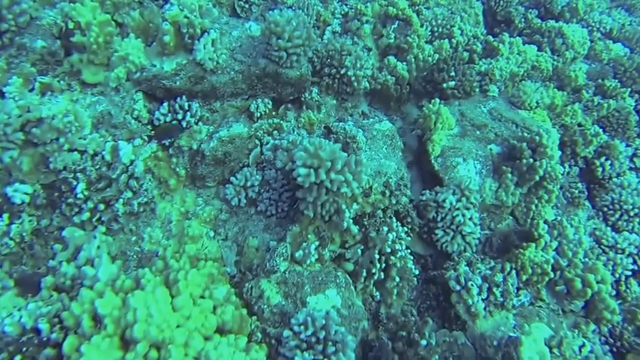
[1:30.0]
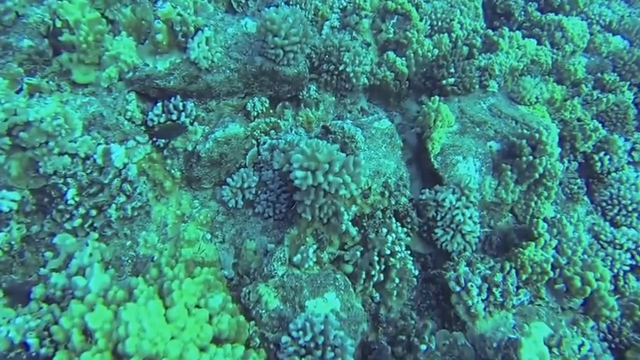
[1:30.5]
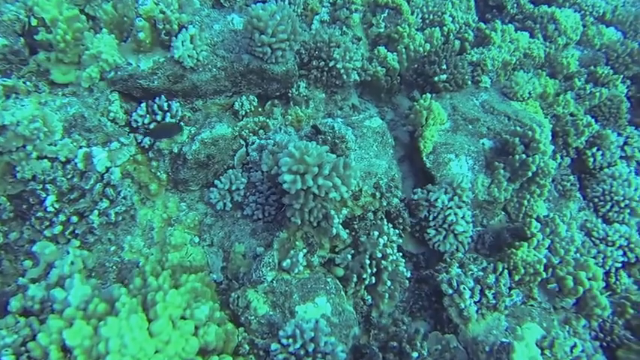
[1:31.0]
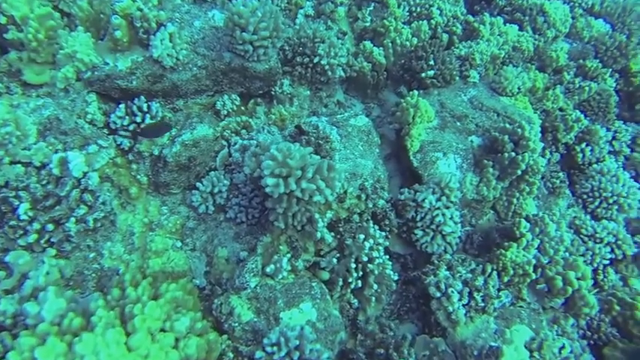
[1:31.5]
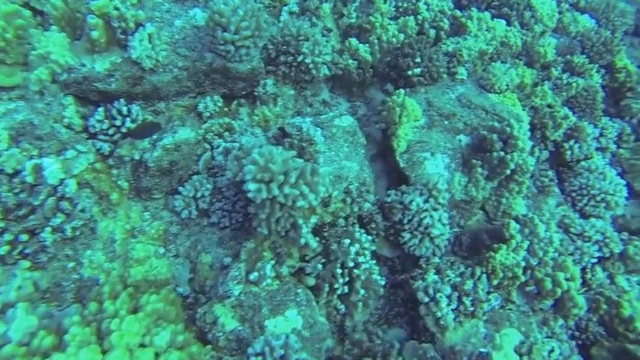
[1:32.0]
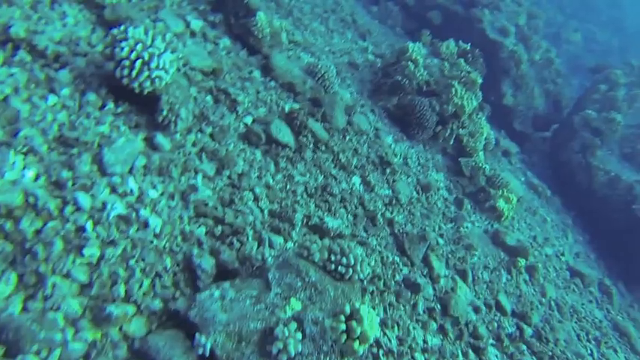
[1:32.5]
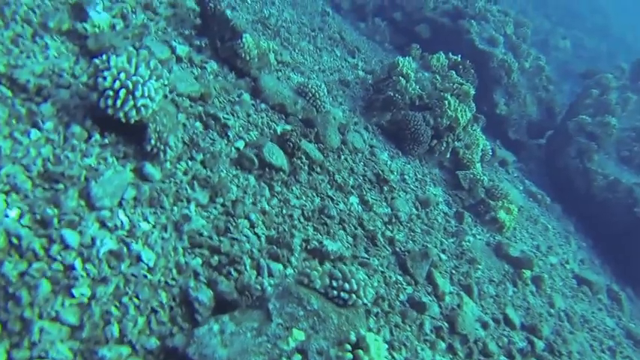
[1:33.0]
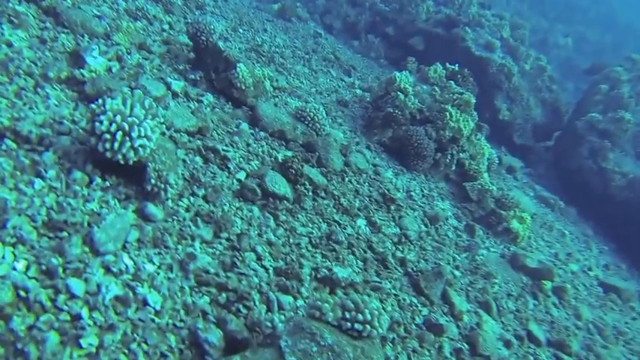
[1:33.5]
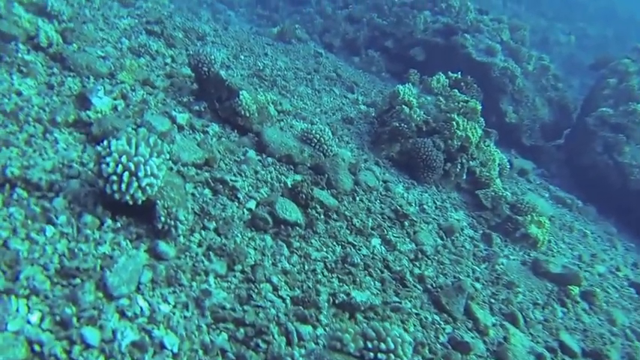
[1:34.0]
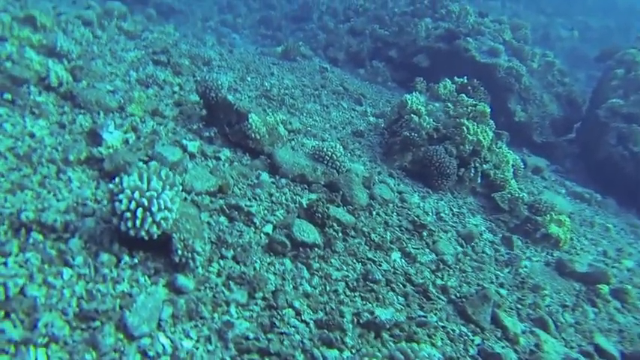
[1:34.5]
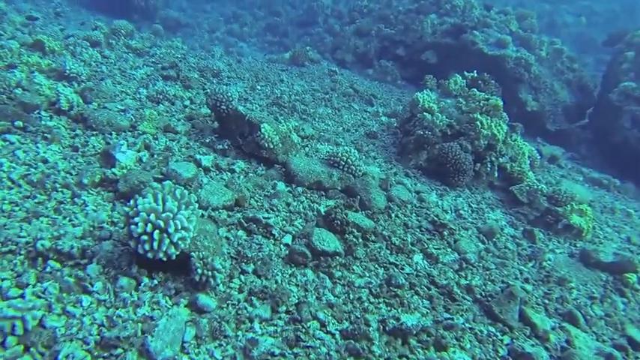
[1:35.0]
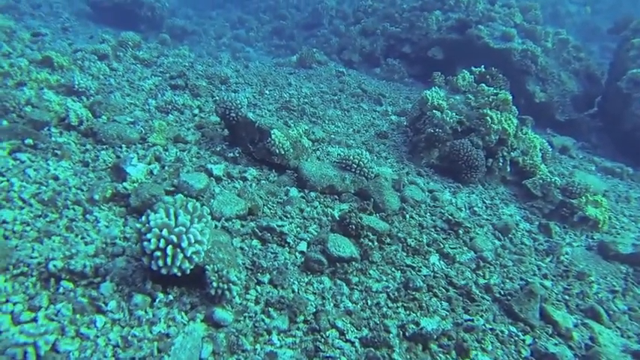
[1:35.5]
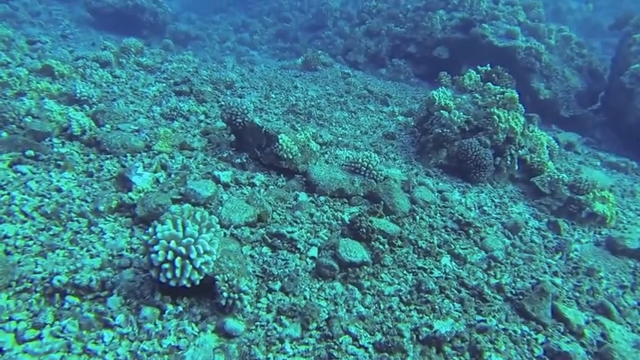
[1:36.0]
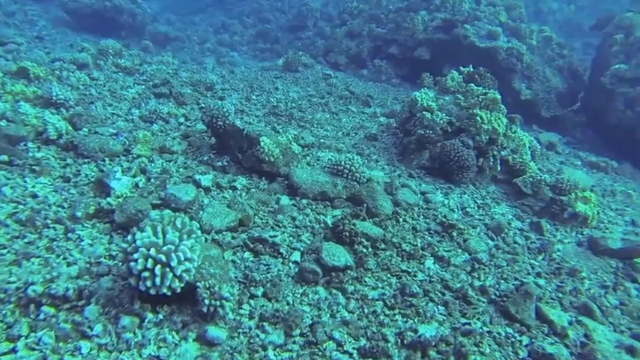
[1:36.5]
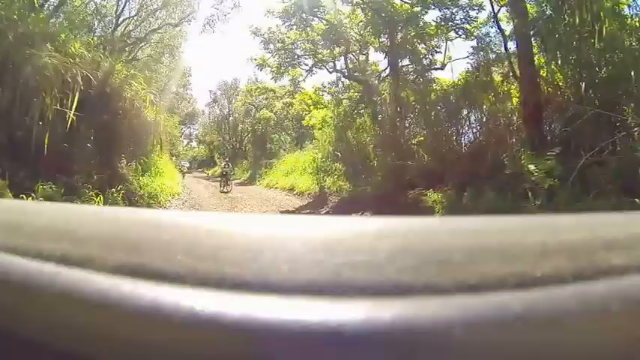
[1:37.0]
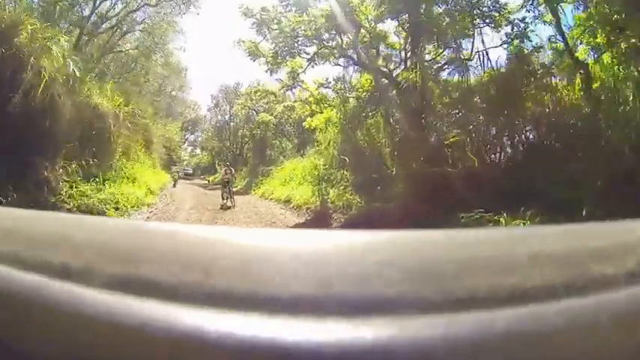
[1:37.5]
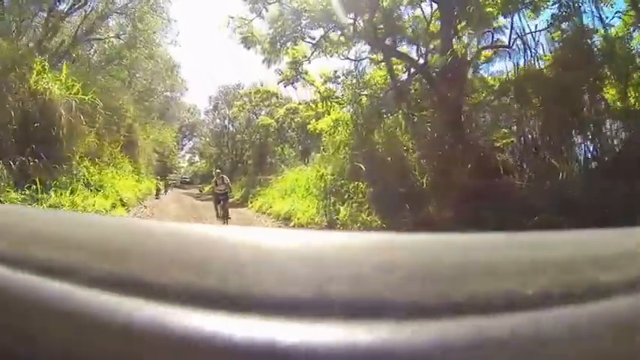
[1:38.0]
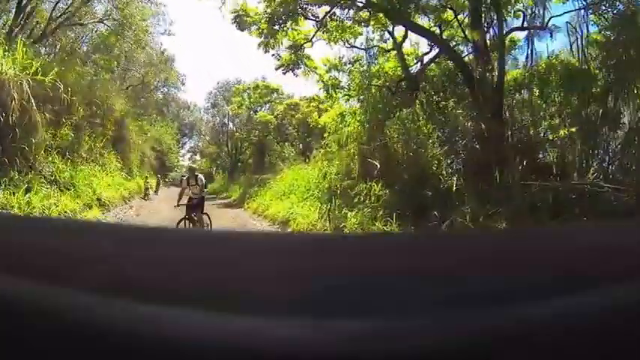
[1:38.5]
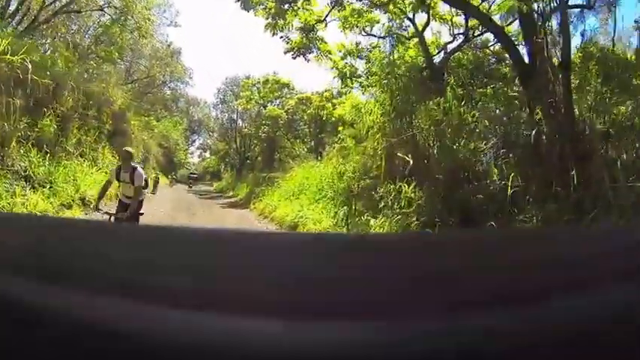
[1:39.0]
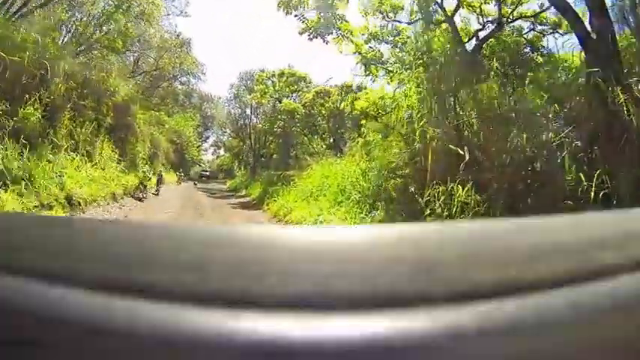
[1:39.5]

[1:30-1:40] An underwater view shows the coral reef, light and green in color with a mixture of purple and gray. The caption at the top reads "GoPro Hawaii scuba diving", with a cartoon image of a man's face in a circle just beside it on the left. The scene shifts to a flatter plane showing more coral. The next scene looks like dash cam video from a vehicle driving on a brown dusty road, surrounded by green trees, with a bit of white sky above and sunlight shining down. The vehicle drives toward someone on a bicycle coming in the opposite direction, wearing a white t-shirt, who swerves to the left.